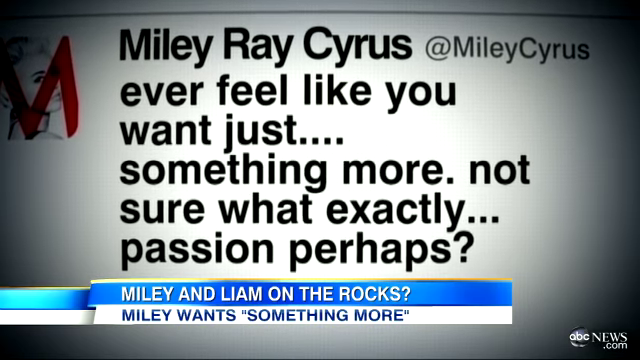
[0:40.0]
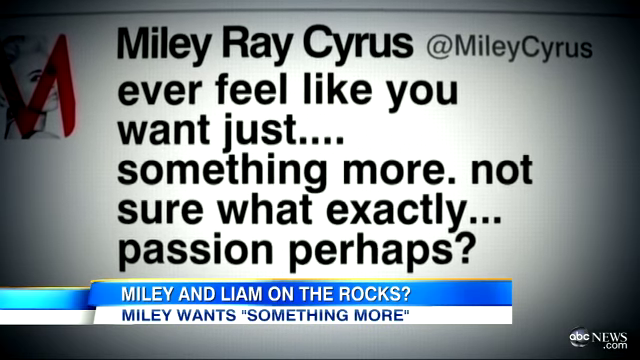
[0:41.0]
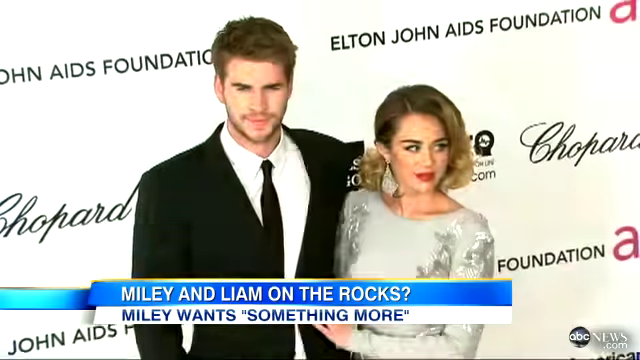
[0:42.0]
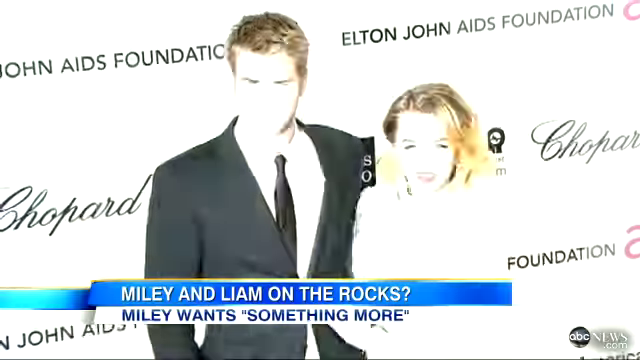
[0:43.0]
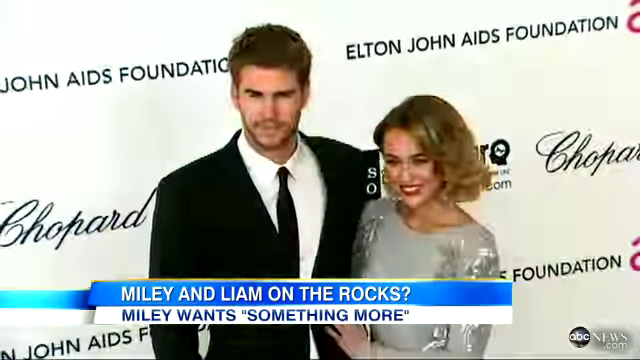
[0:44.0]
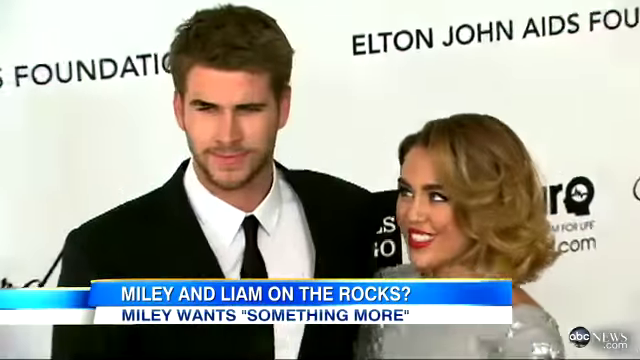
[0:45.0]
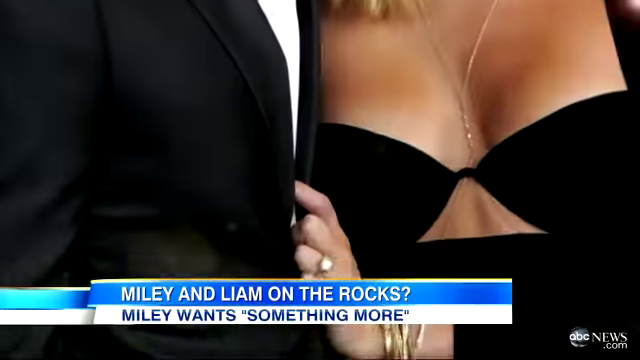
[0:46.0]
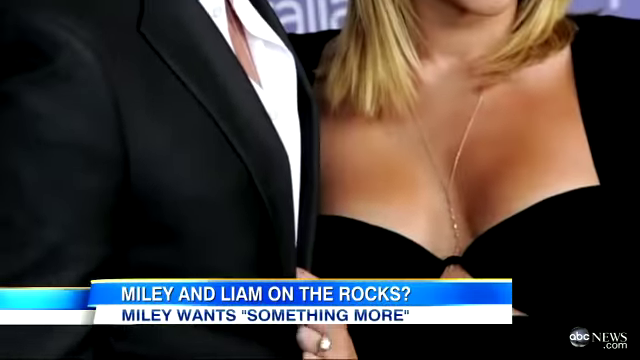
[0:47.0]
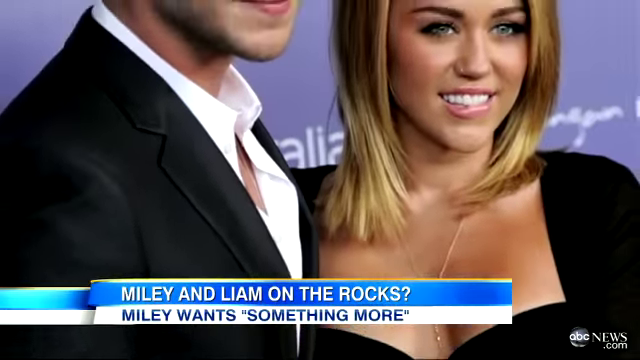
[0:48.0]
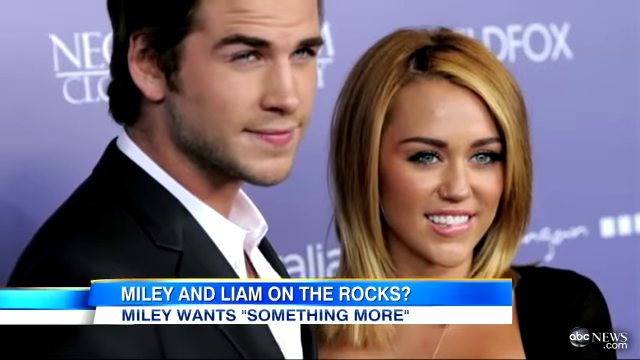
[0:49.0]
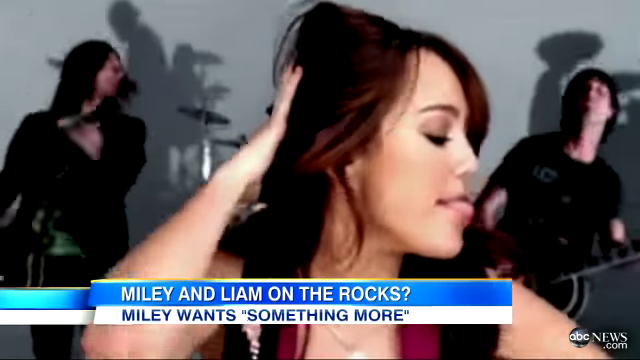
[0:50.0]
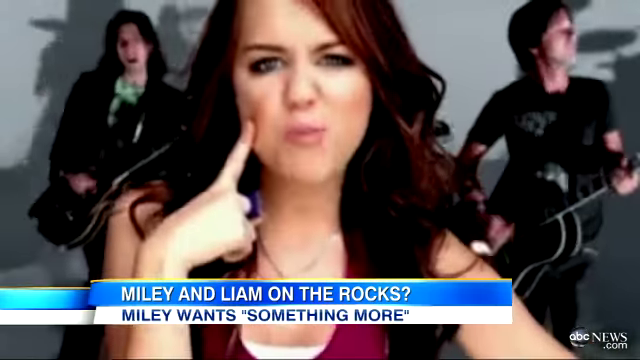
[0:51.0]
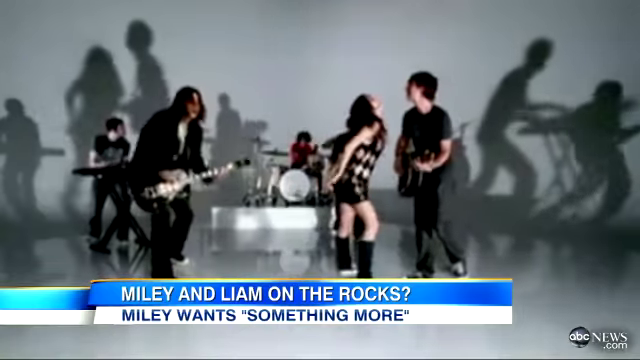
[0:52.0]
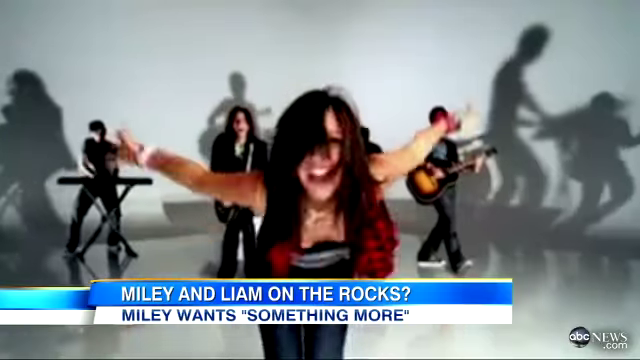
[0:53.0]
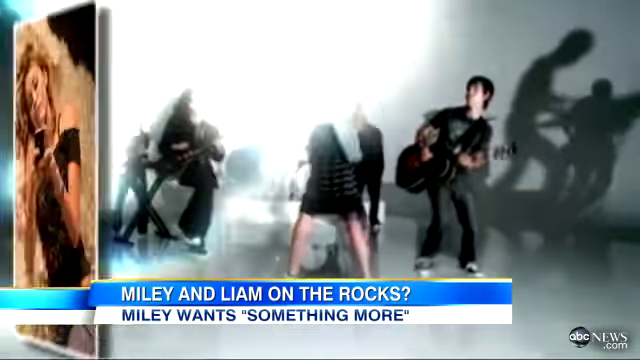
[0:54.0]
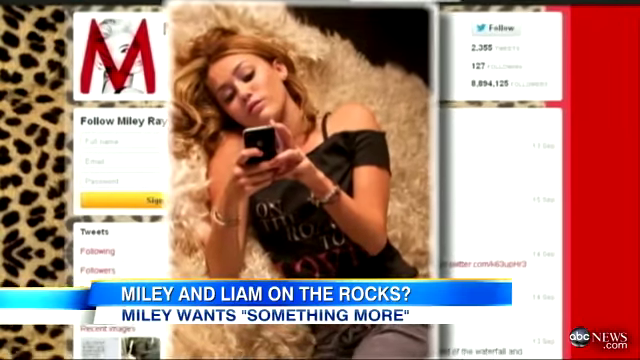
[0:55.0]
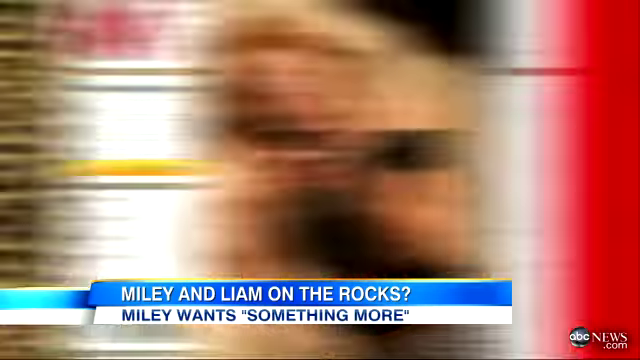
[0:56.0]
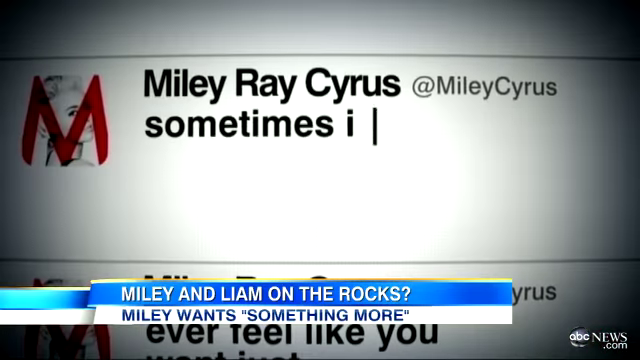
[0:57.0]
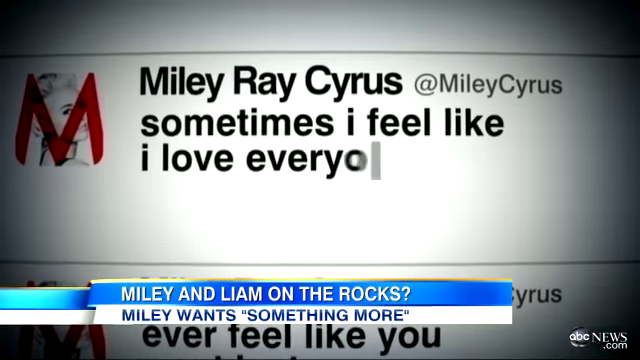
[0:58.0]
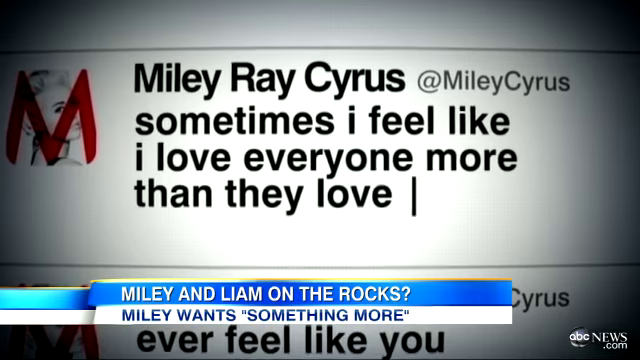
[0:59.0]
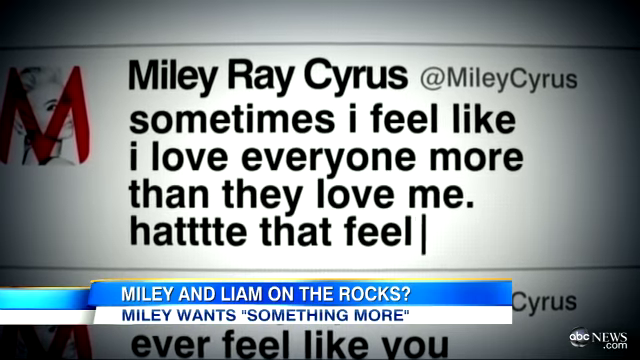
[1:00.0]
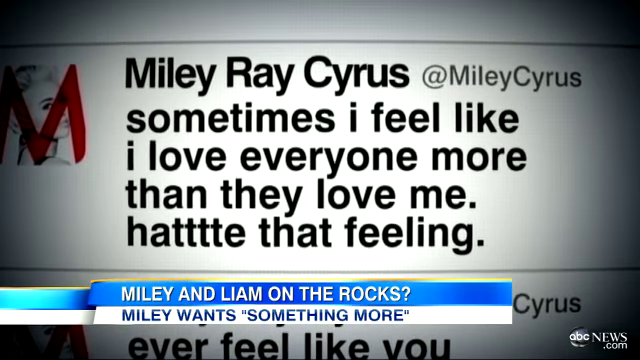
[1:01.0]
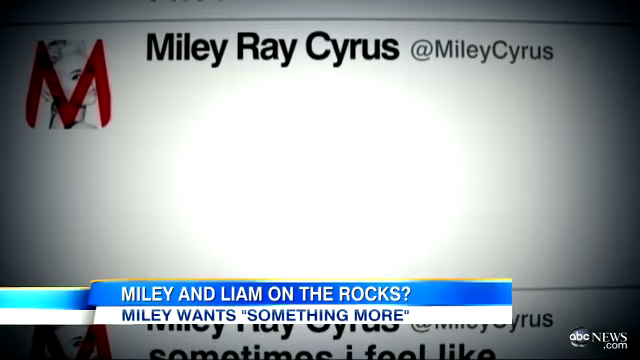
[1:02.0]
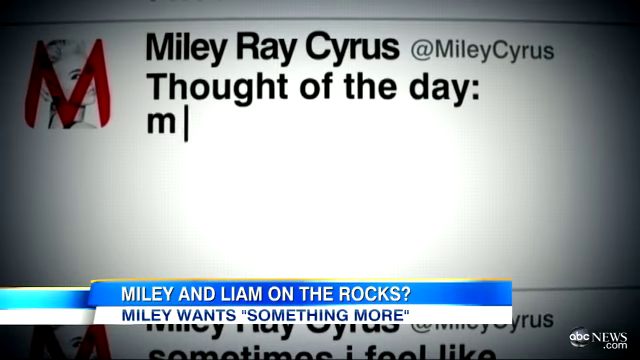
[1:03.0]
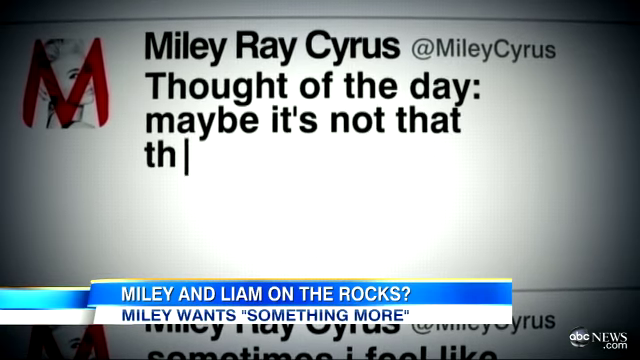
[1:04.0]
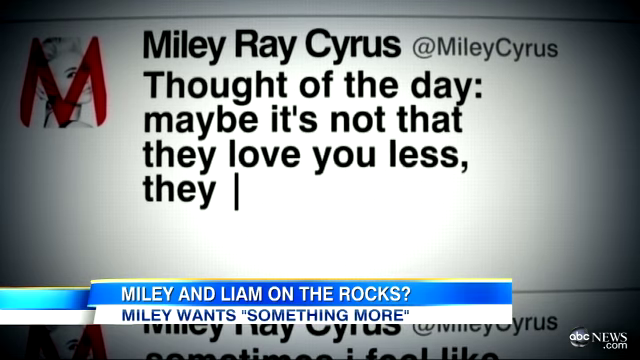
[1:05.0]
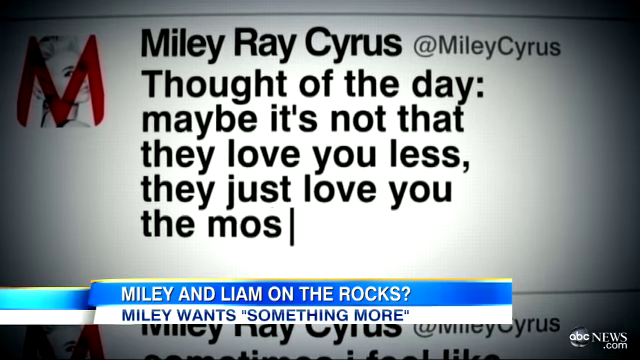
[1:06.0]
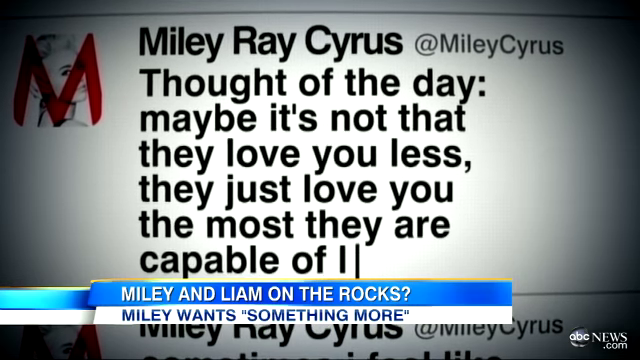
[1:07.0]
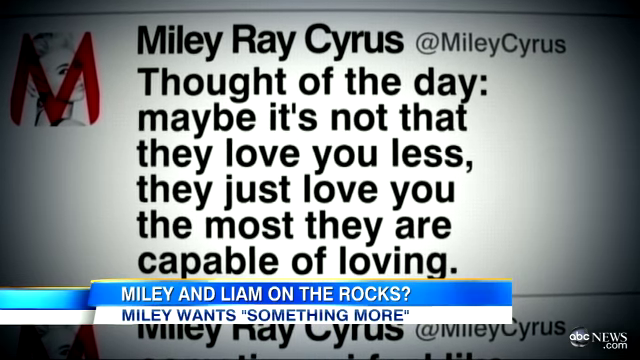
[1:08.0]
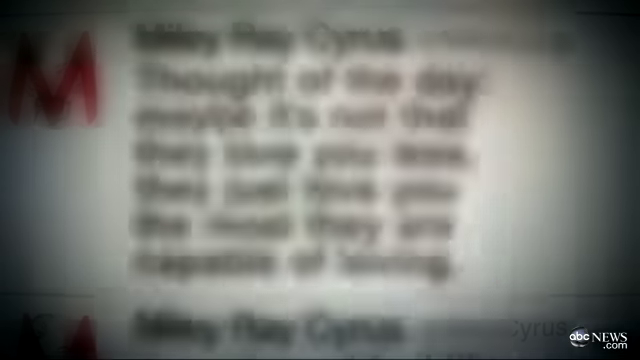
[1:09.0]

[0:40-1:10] Miley Cyrus and her husband or boyfriend are shown at the Elton John AIDS Foundation event, followed by another picture of them, all dressed up in suits and dresses. A picture of her in a magazine appears, then more of her tweets: "Sometimes I feel like I love everyone more than they love me. I hate that feeling" and "Thought of the day, maybe it's not that they love you less. They just love you the most they are capable of loving." A younger man, probably around 30, is briefly interviewed. In her music video she wears a plaid dress. The segment is from Good Morning America.